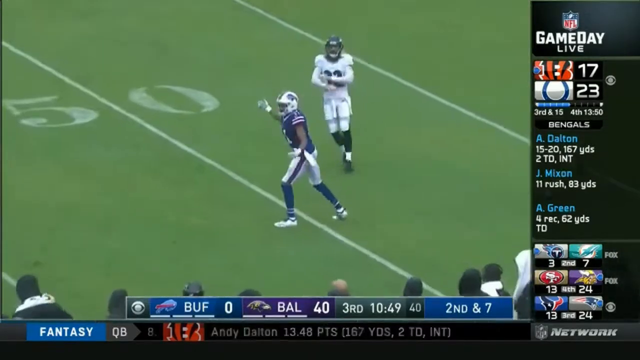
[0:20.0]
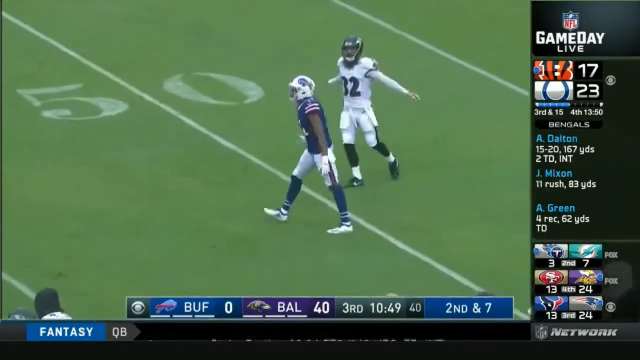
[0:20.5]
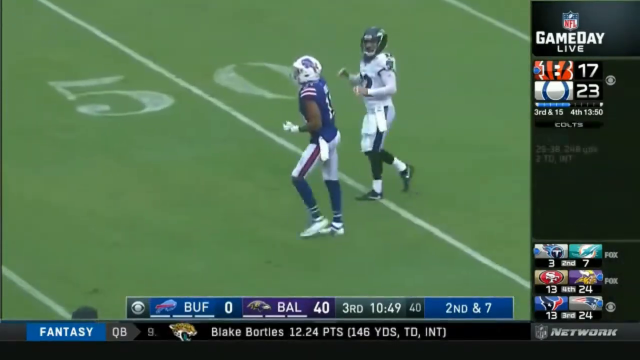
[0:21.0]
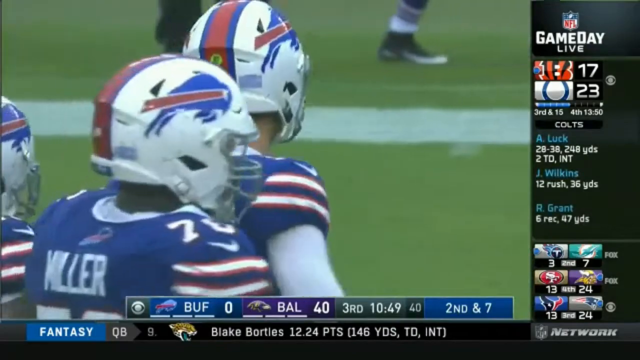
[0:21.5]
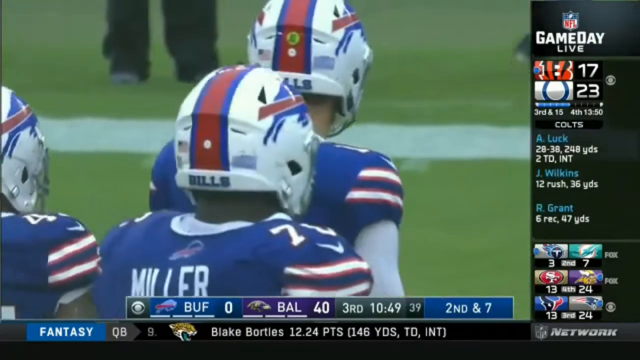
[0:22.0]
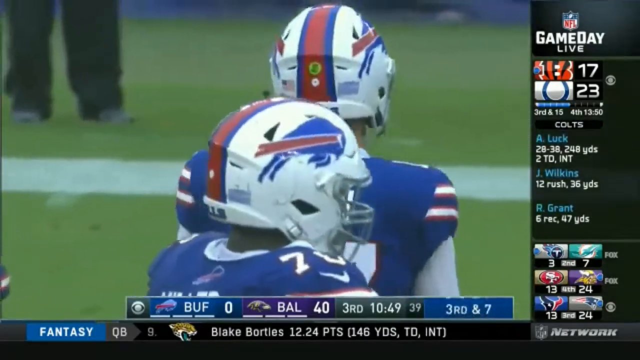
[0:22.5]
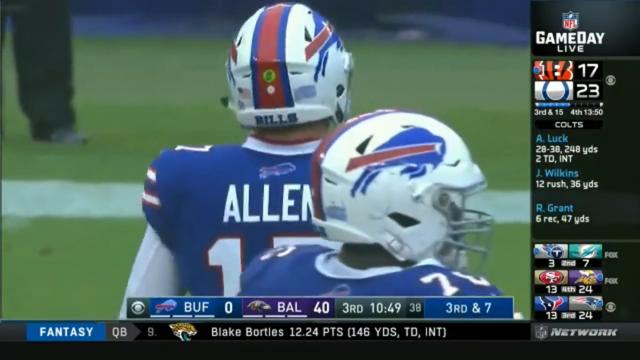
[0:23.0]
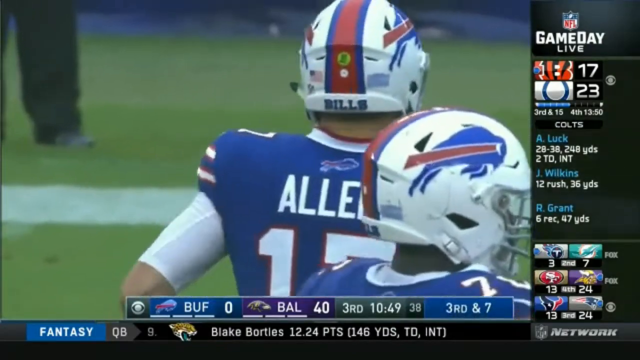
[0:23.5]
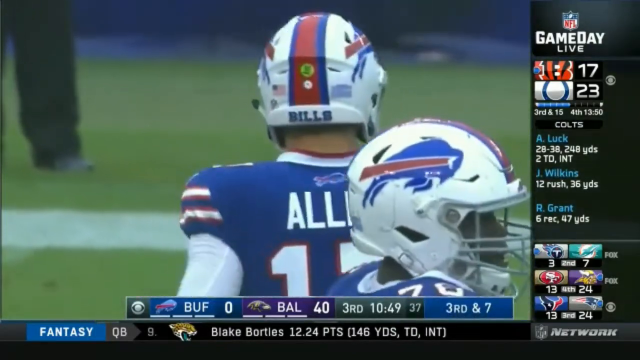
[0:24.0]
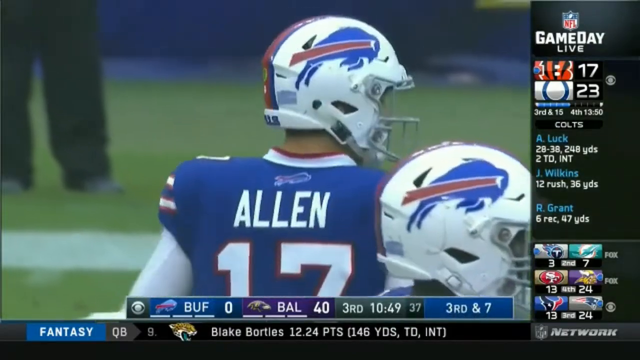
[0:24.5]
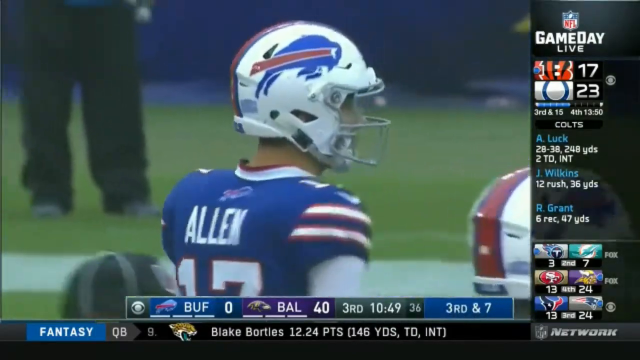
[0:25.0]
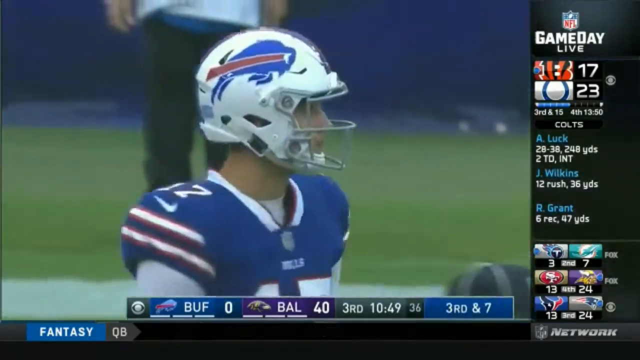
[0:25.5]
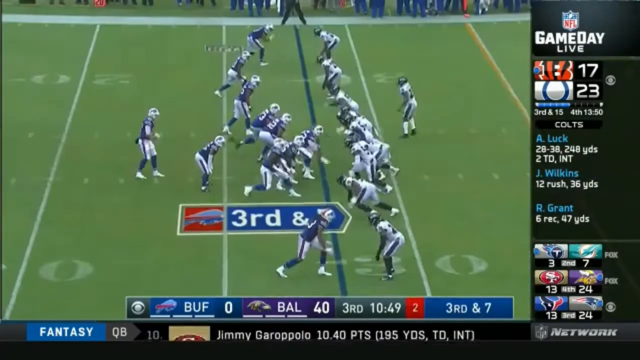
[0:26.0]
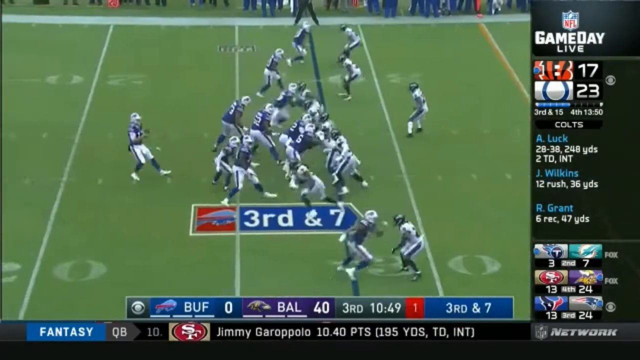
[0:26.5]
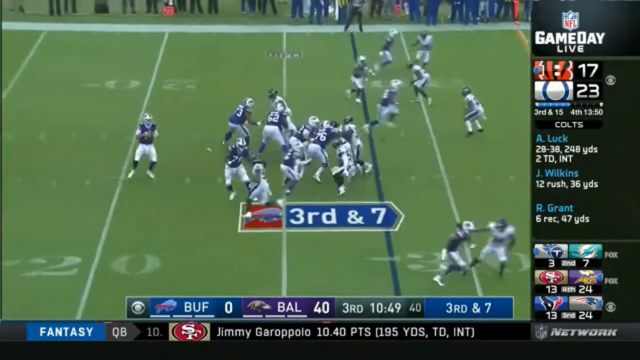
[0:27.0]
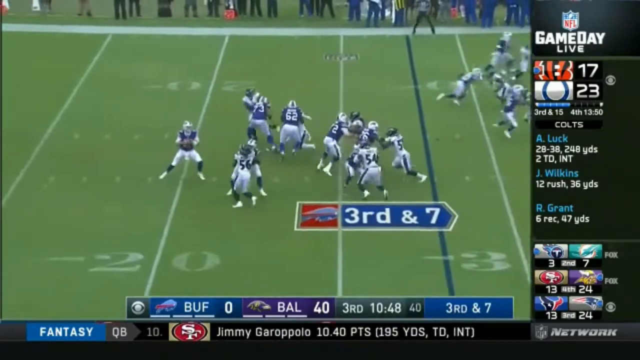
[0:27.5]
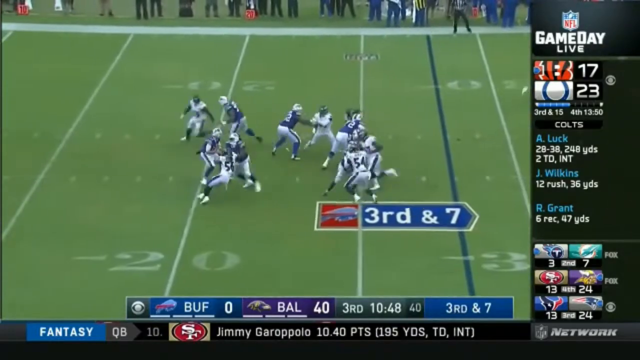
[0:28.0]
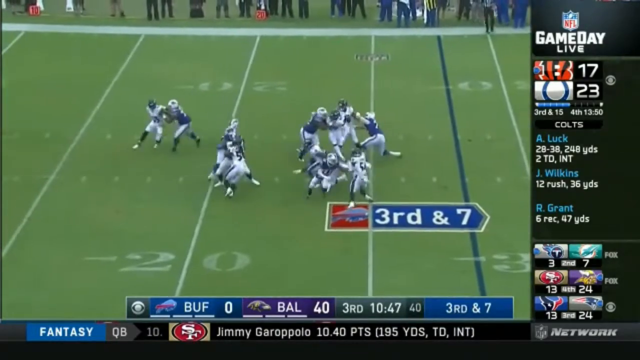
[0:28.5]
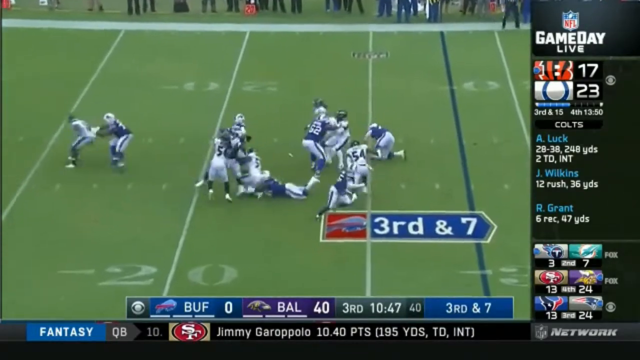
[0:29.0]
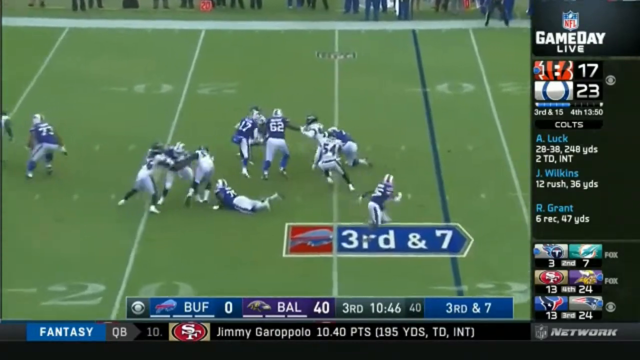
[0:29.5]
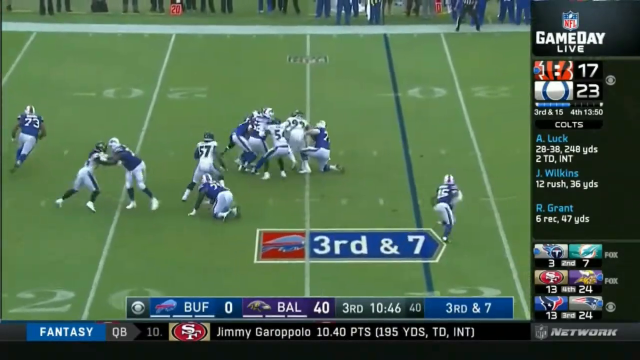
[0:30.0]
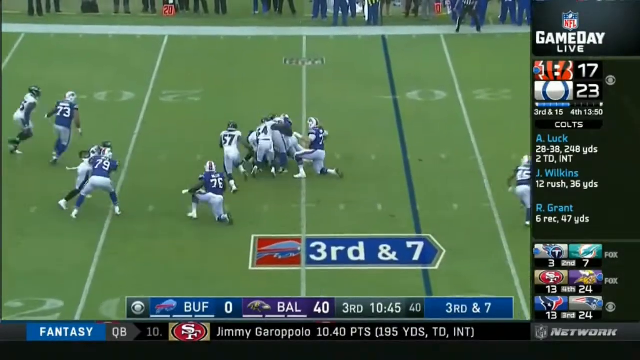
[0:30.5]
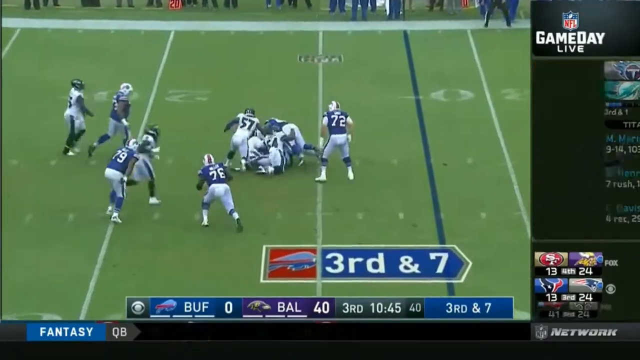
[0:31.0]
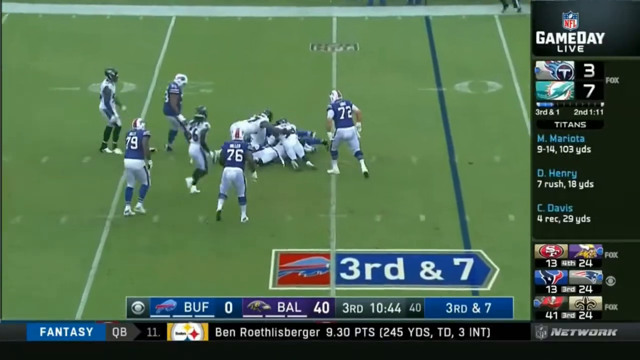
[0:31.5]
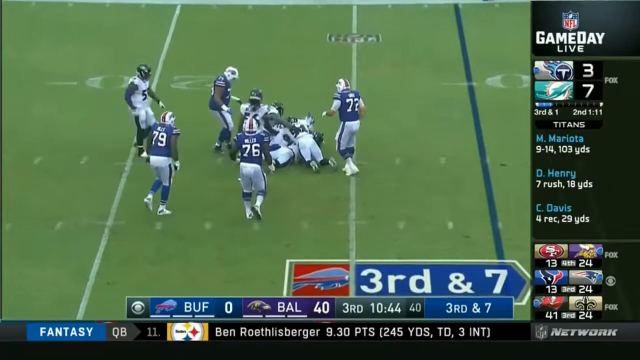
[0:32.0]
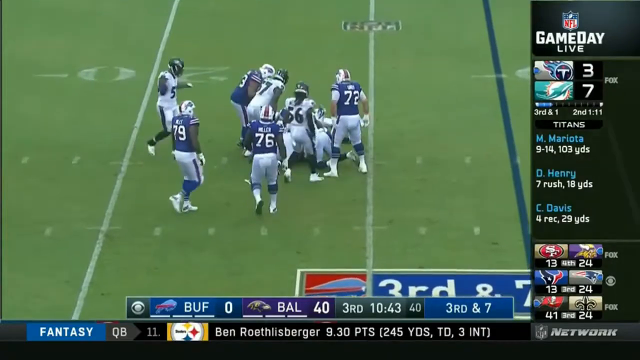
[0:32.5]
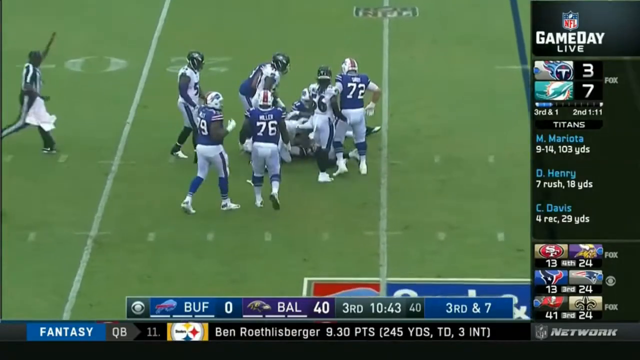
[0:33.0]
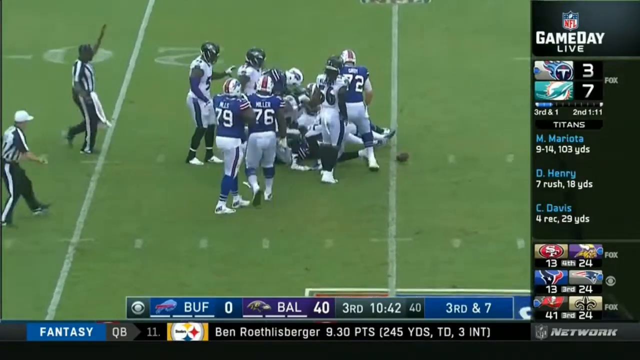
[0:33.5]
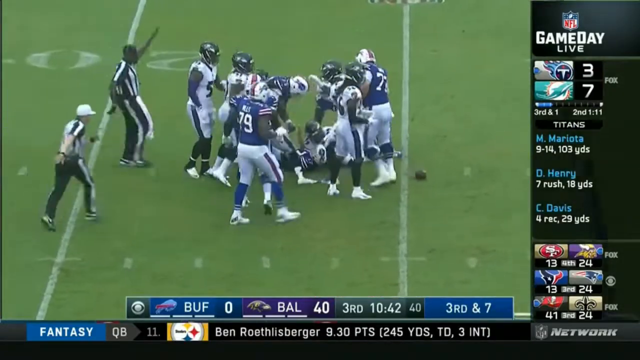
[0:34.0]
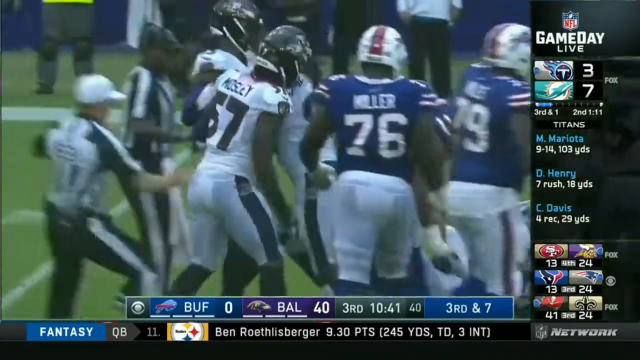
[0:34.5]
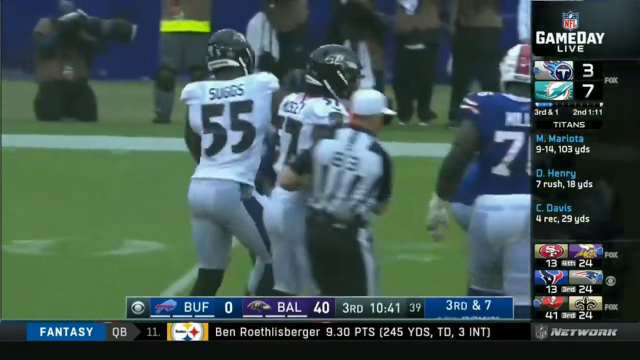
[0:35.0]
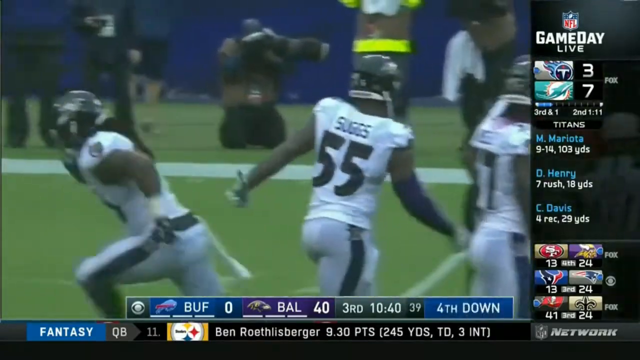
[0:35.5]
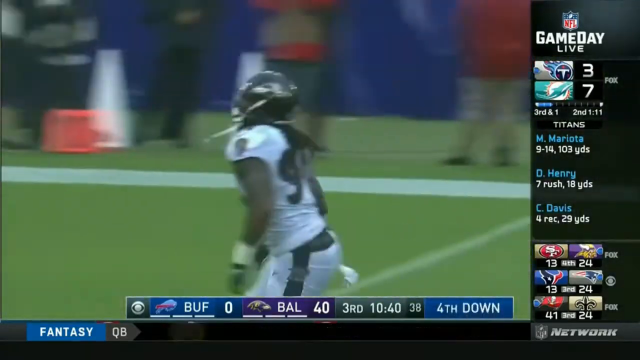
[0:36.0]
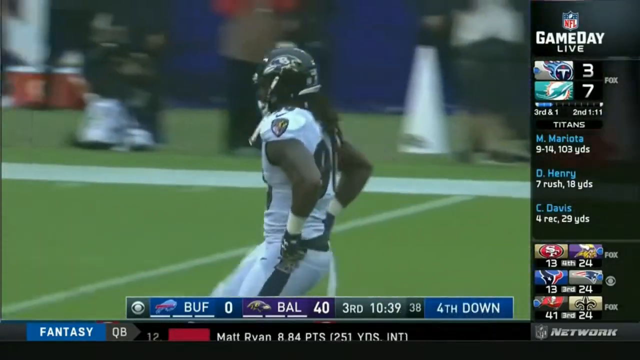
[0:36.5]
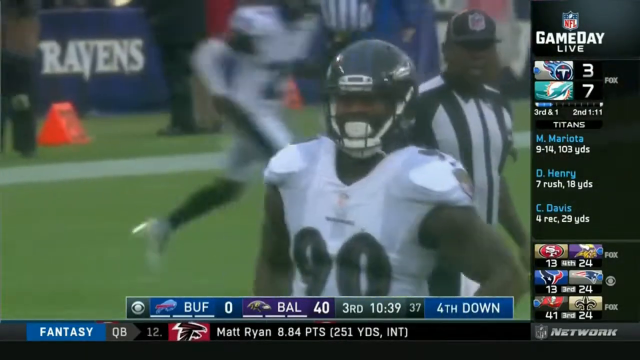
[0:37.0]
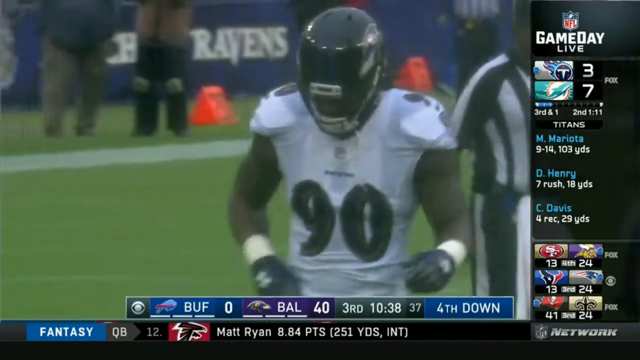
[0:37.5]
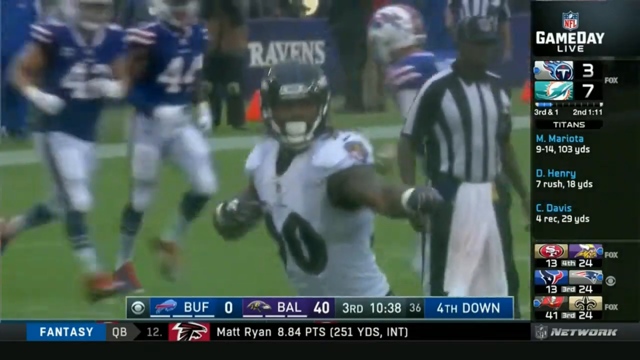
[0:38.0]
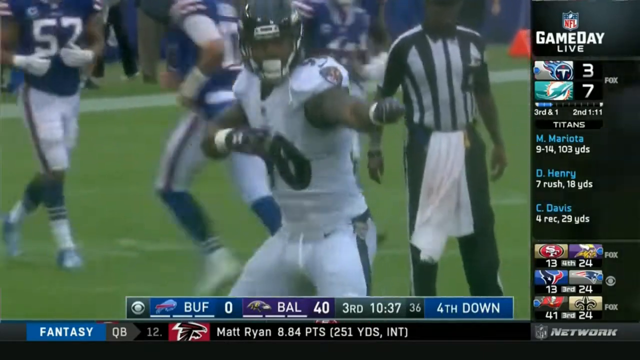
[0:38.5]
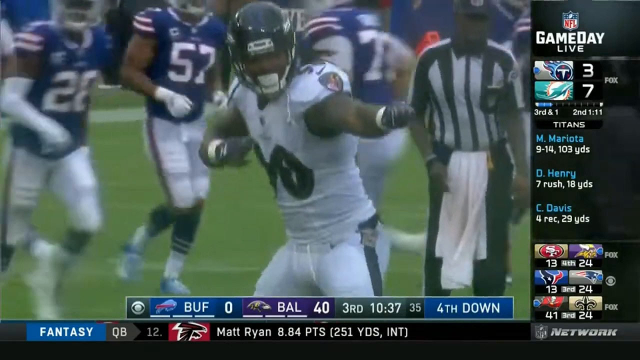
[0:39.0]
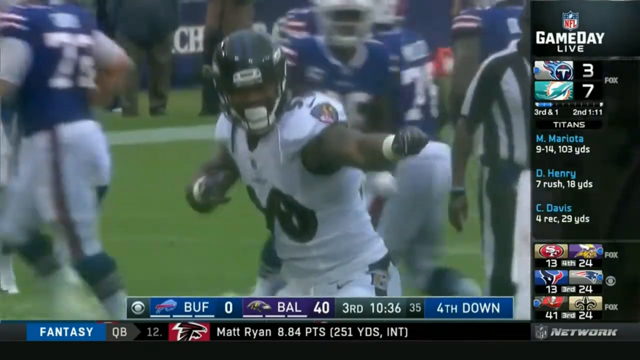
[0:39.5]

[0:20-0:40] After the incomplete pass, the Buffalo team sort of walks back, and the camera focuses on Allen as he sort of walks and turns to the right. It is now third and seven. The ball is passed back and he runs back a little, sort of shuffles, first trying to run up the field; when a defender gets in front of him, he tries to cut through while a teammate, blocking on the right, tries to push the other player. Allen fails to get through and falls to the ground, and other Baltimore players fall on him, bringing his teammate down too, stopping the play. Baltimore's number 90 then sort of runs out, crouches down a little and circles his right hand in a counterclockwise motion while his body looks like it is doing a riding motion, probably to mock the Buffalo team, which has not scored and whose plays keep getting stopped.